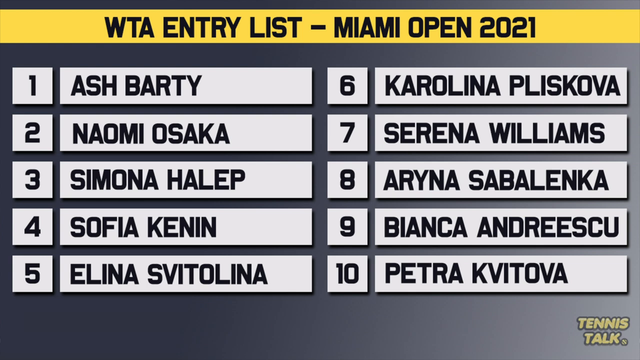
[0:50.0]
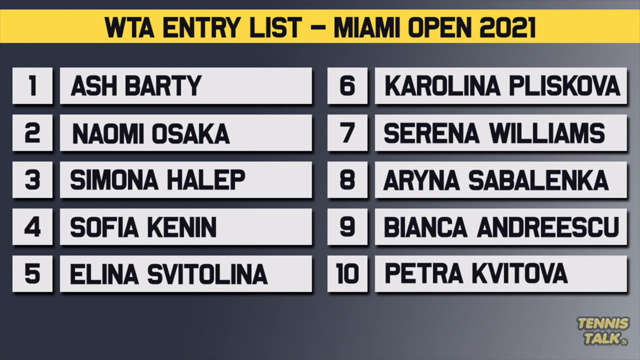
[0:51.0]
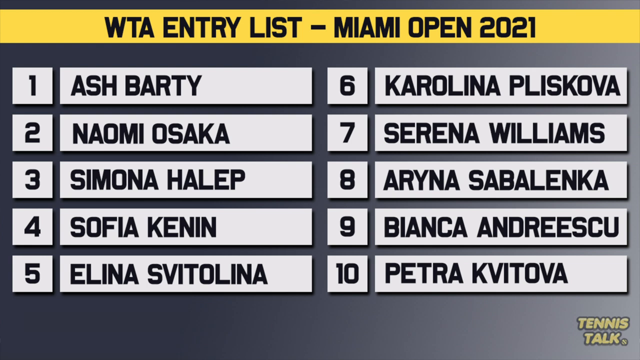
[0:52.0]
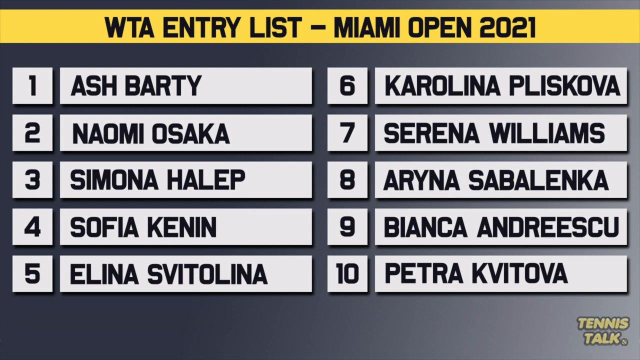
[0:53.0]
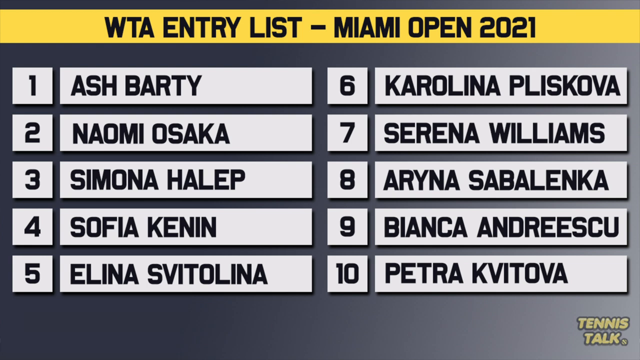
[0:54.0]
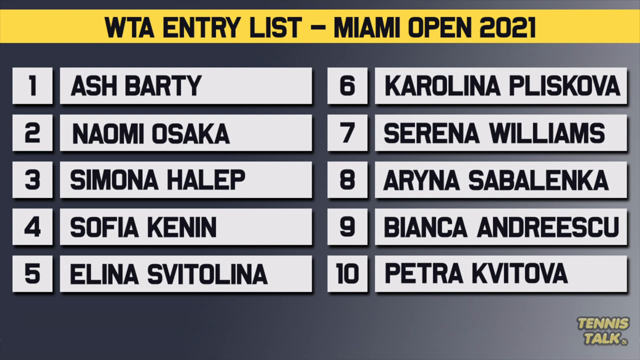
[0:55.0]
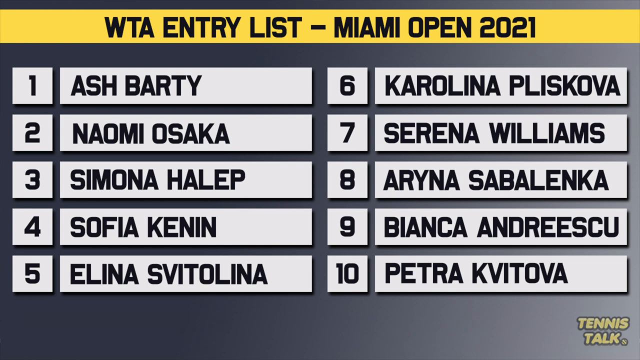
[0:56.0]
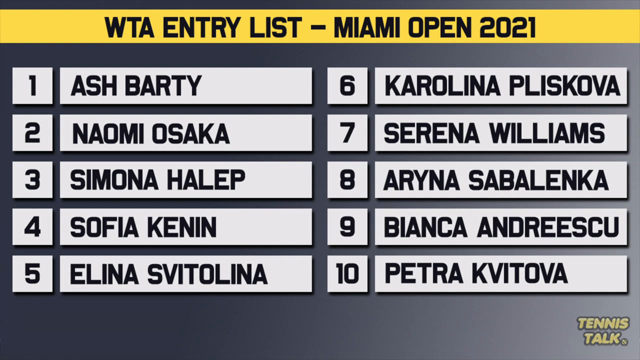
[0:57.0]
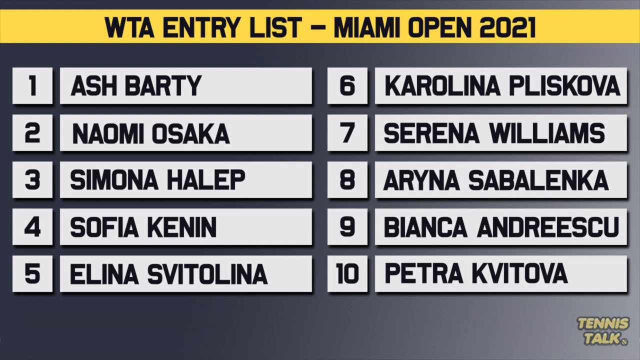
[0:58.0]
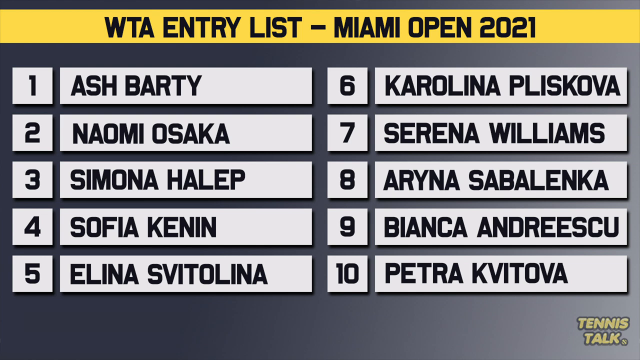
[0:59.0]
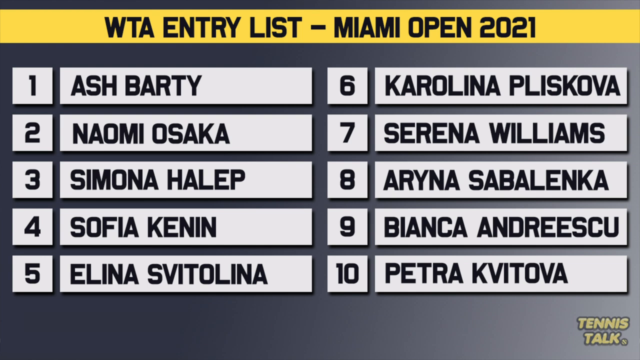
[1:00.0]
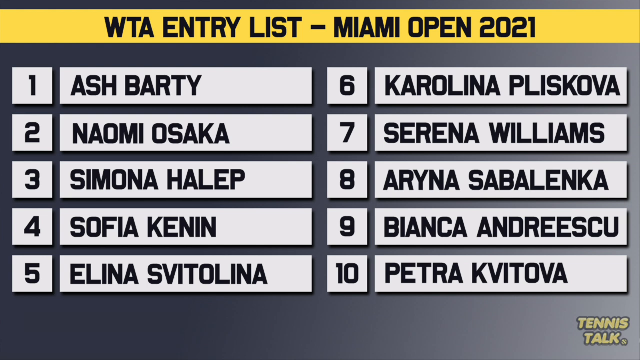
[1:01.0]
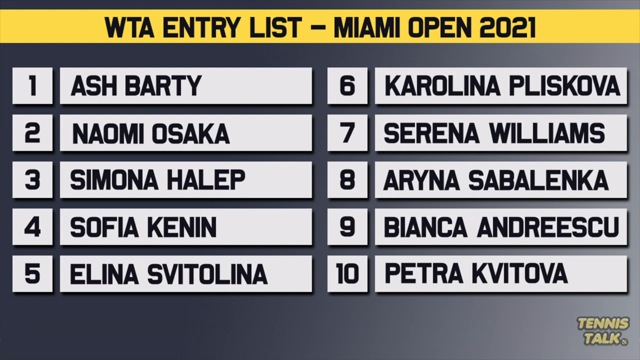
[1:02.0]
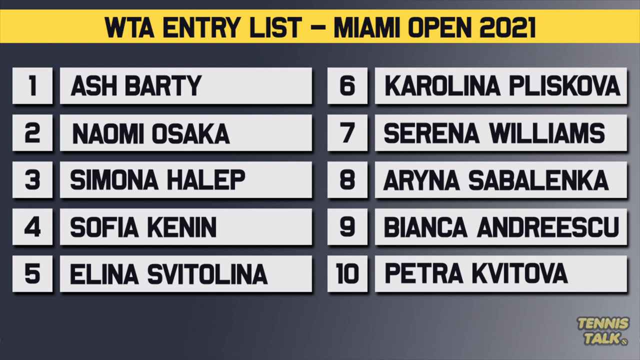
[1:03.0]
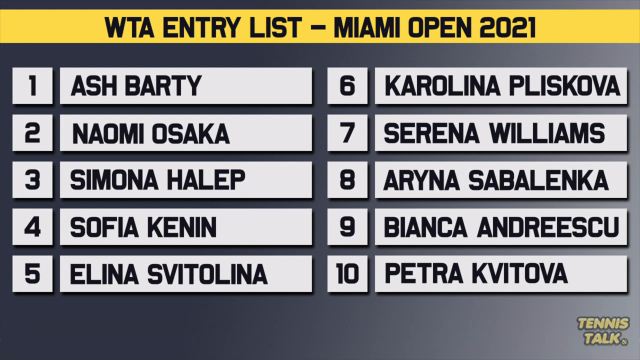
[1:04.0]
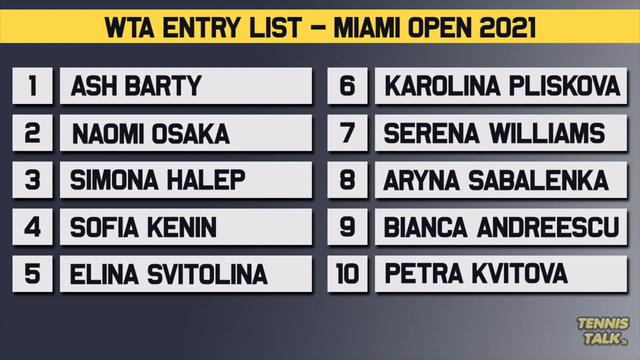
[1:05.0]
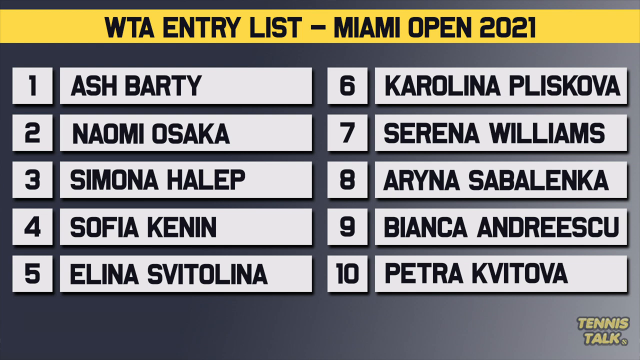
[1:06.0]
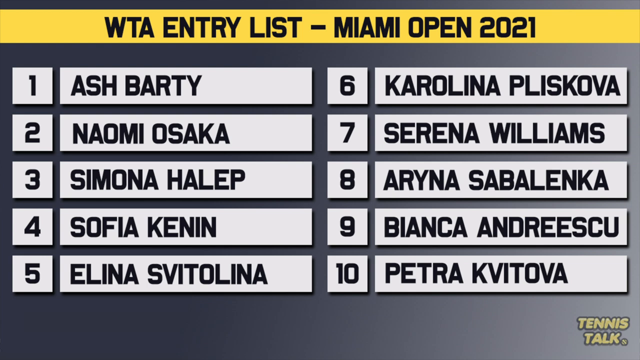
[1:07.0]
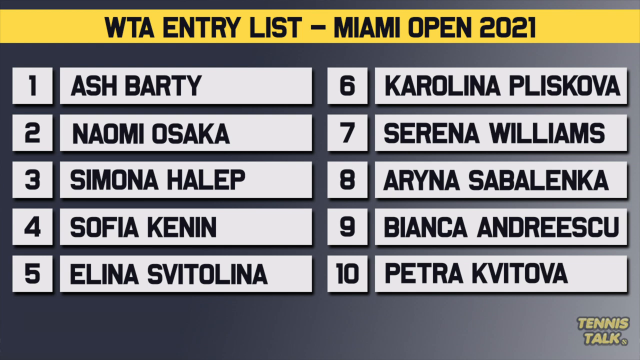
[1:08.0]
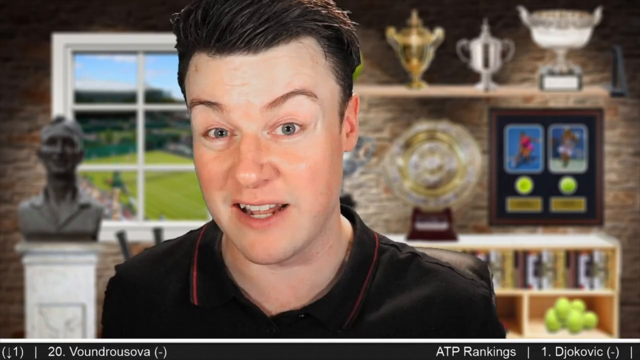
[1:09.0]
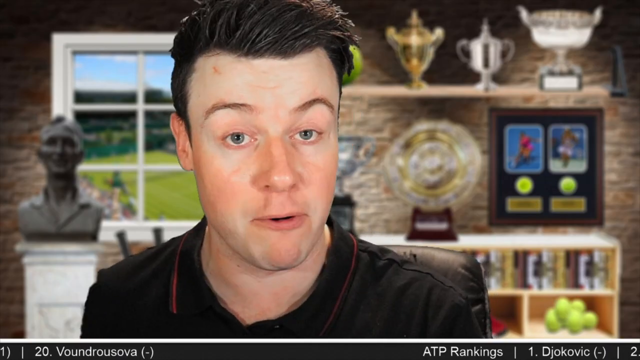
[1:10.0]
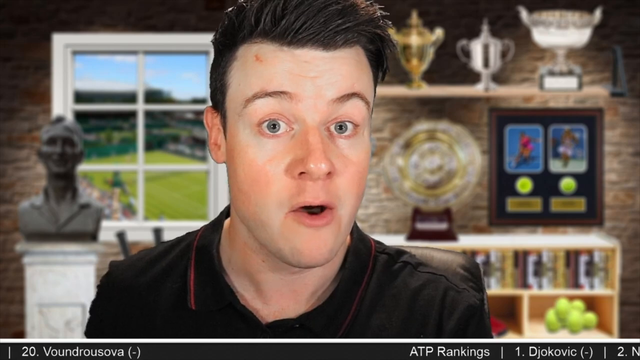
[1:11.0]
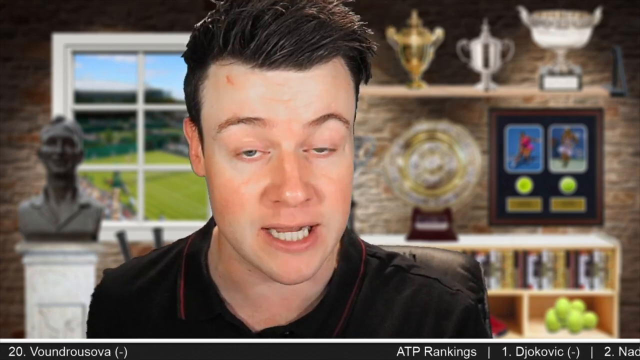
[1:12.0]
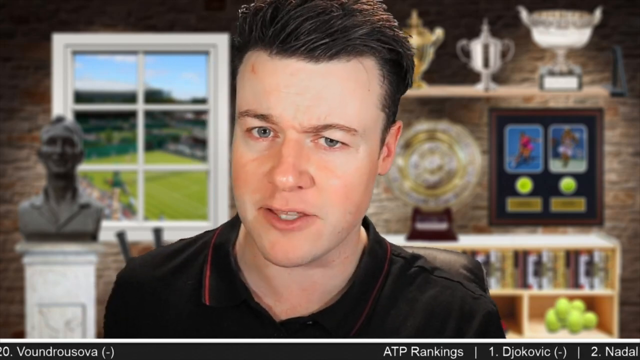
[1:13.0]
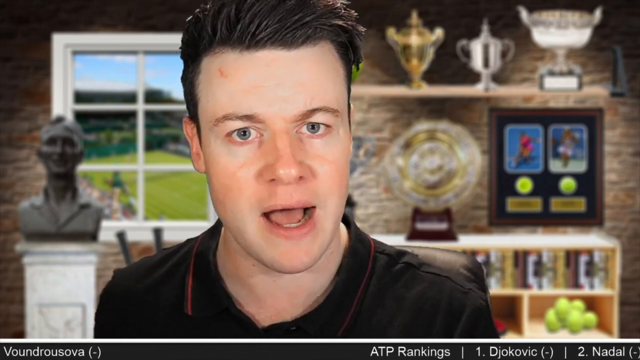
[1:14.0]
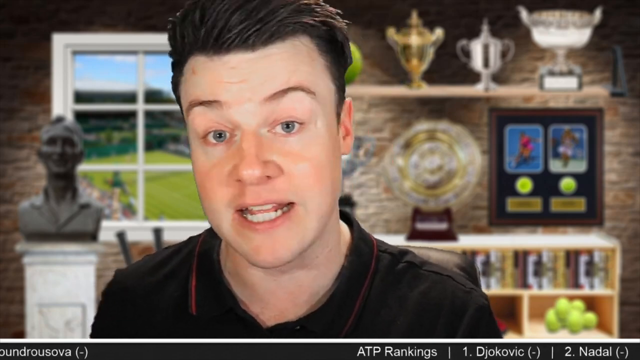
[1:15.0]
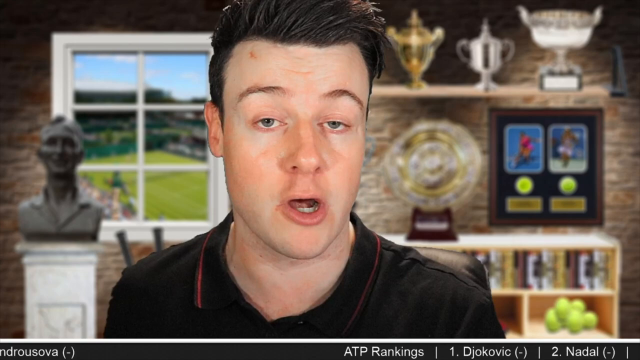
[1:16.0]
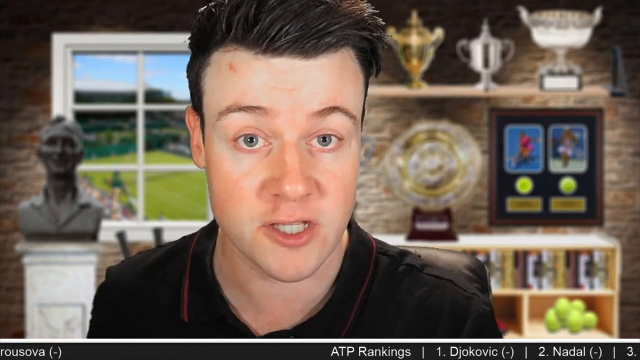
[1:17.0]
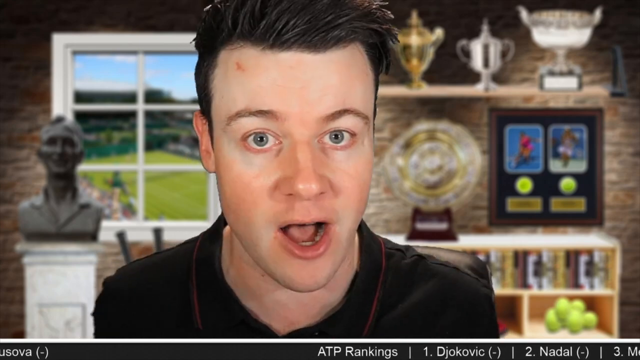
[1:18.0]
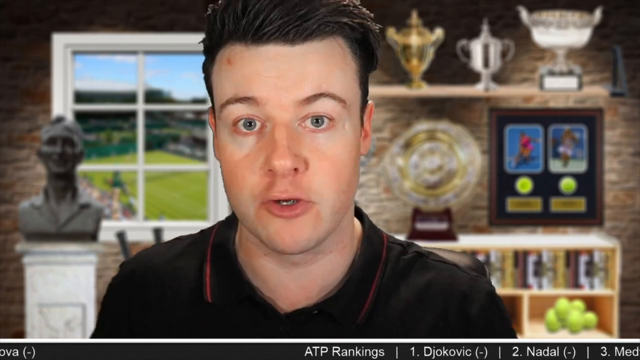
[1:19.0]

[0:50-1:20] The words "Tennis Talk" appear in yellow in the bottom right of the screen. A list of the top ten female seeds for the Miami Open is shown in two columns of five, each entry giving a number and a player's name in black, with sort of a white rectangle behind each number and name. Number one is Ash Barty, with number 2, Naomi Osaka, below her, and the list continues in the same way. The video returns to the host, who talks directly to the camera in front of a fake background with many tennis trophies and a picture of a tennis court. He is very animated: his right hand pops up momentarily with one finger raised, he shrugs his shoulders occasionally, and he maintains a lot of eye contact with the camera. Briefly, a picture of Rafael Nadal appears; he appears to have won a tournament in the photo.